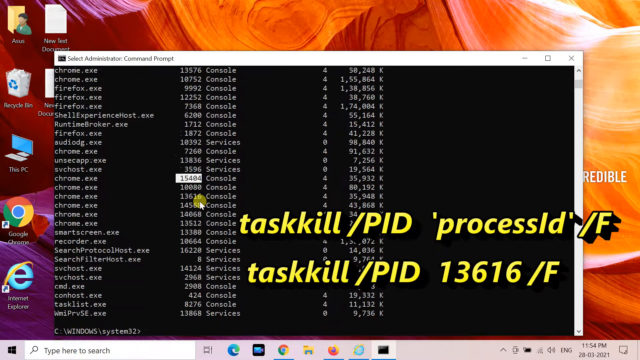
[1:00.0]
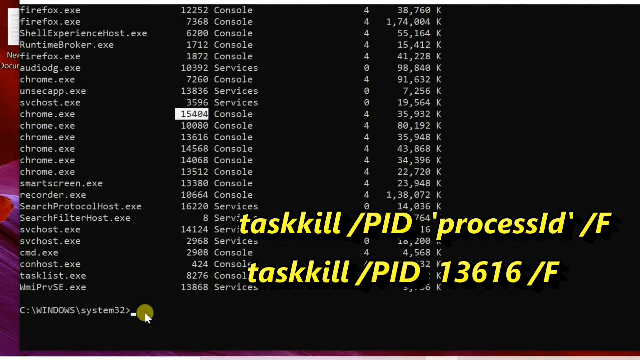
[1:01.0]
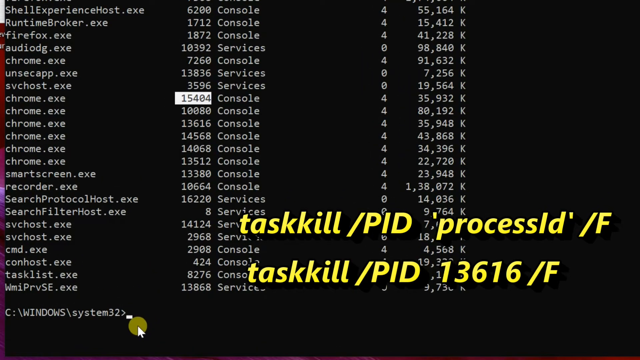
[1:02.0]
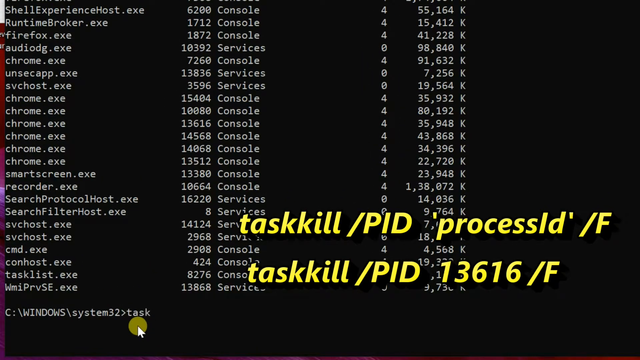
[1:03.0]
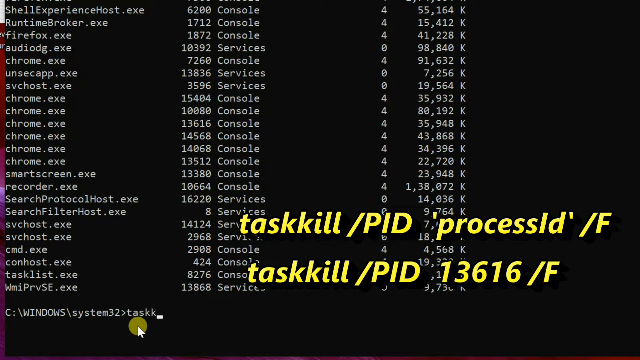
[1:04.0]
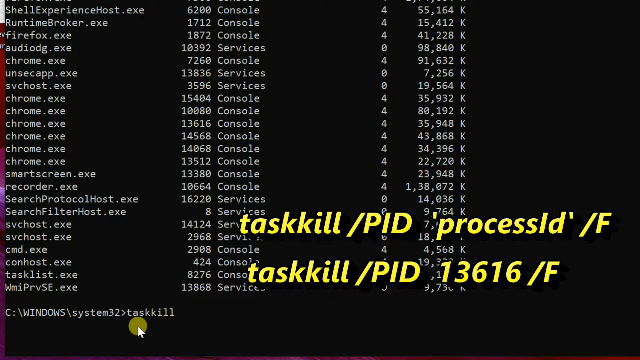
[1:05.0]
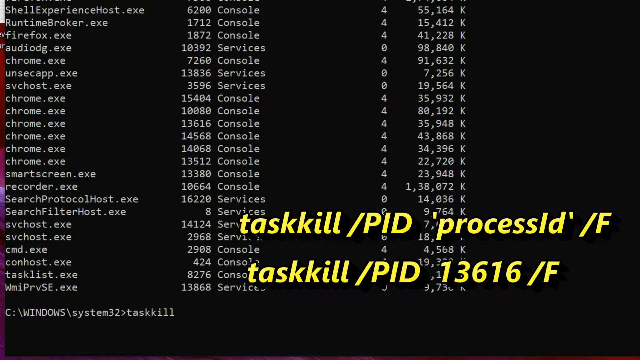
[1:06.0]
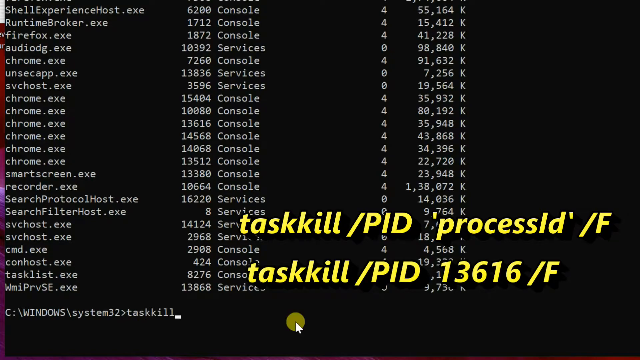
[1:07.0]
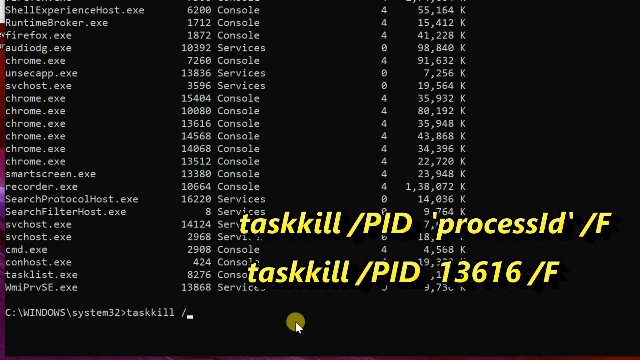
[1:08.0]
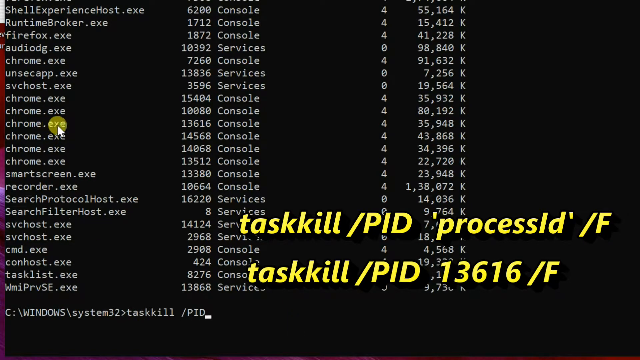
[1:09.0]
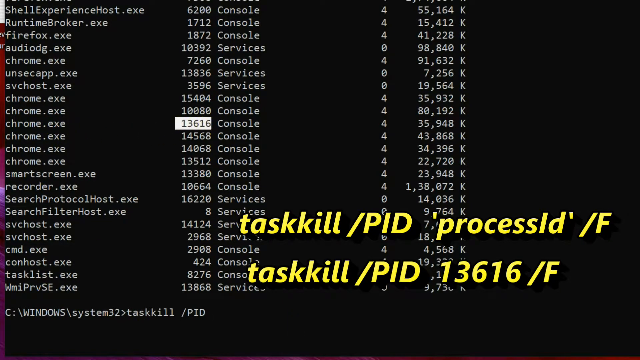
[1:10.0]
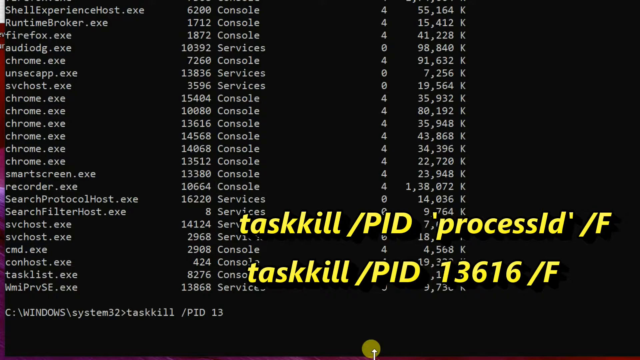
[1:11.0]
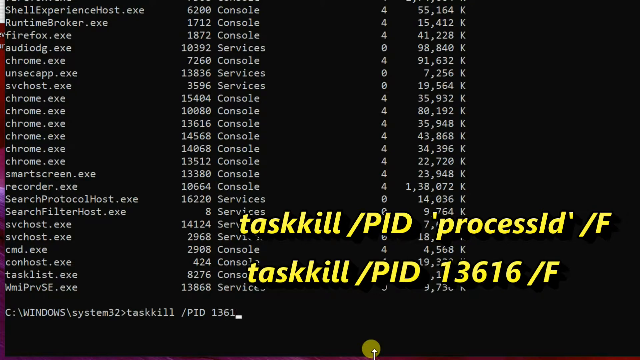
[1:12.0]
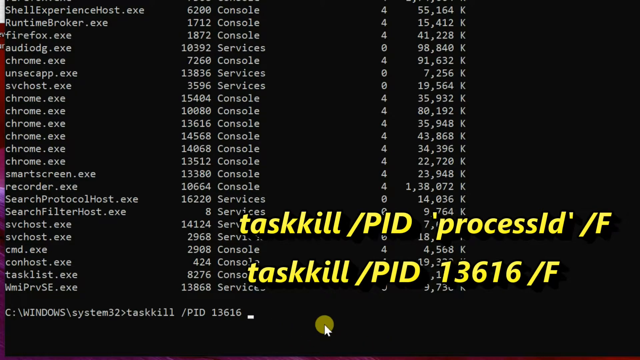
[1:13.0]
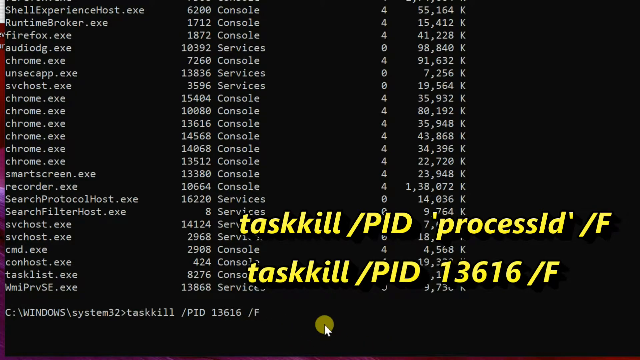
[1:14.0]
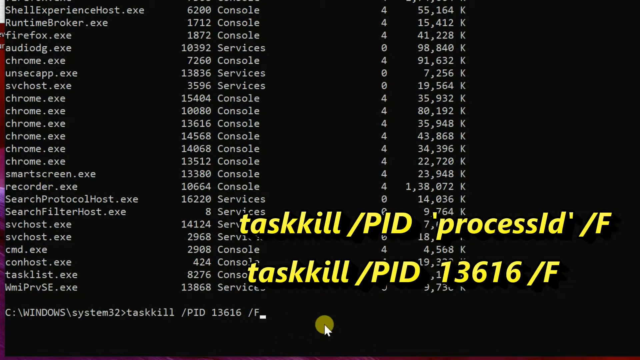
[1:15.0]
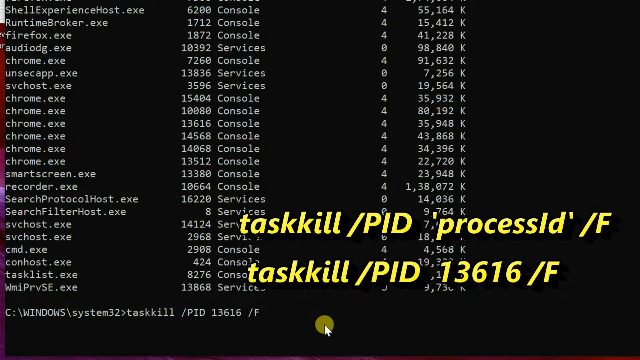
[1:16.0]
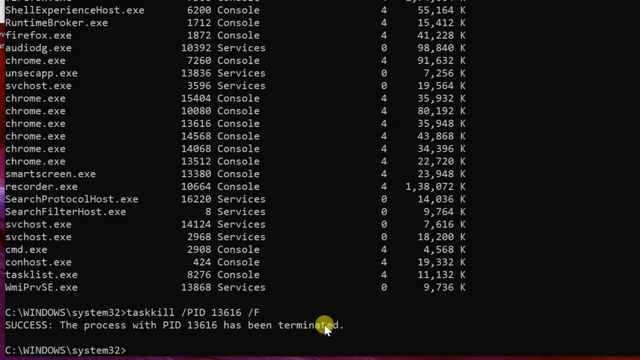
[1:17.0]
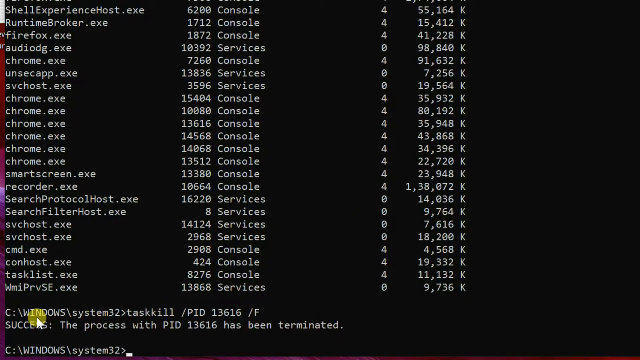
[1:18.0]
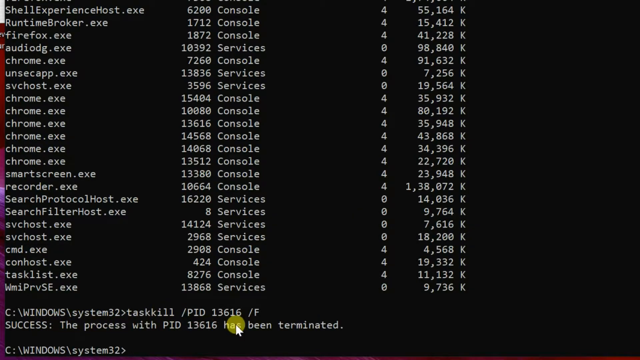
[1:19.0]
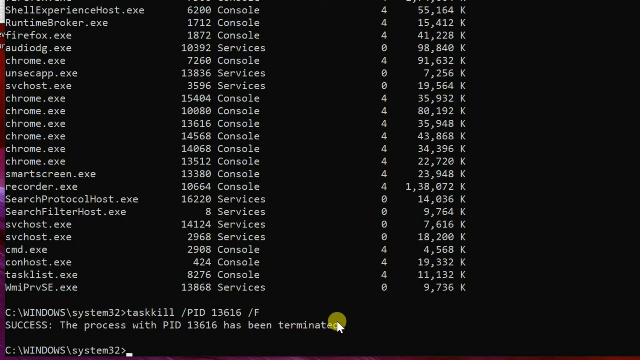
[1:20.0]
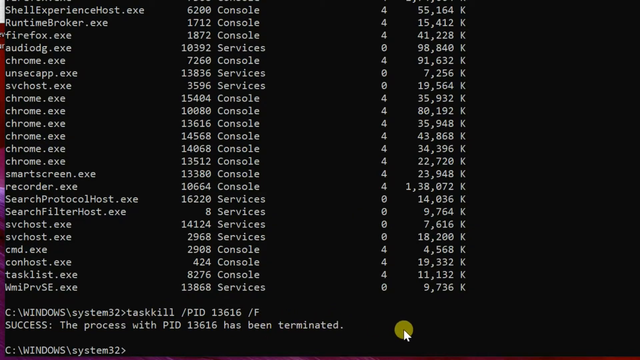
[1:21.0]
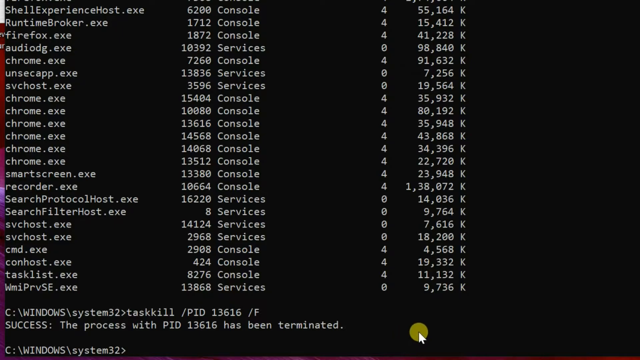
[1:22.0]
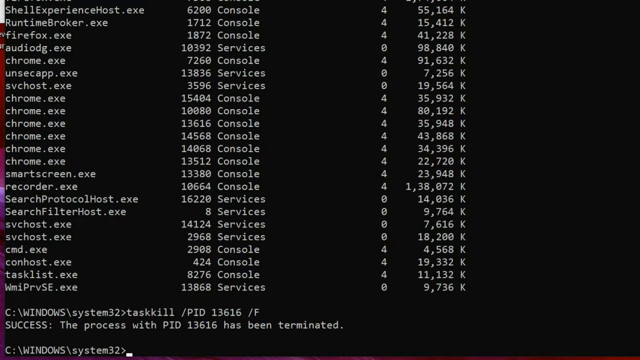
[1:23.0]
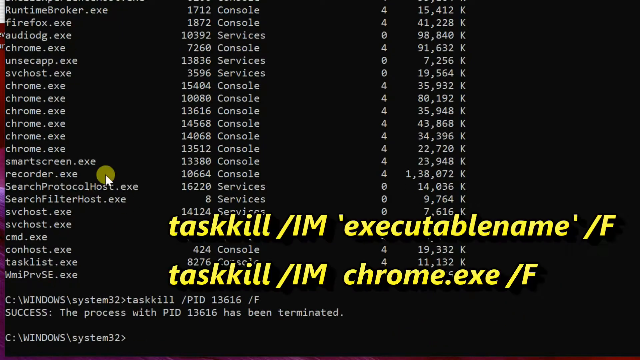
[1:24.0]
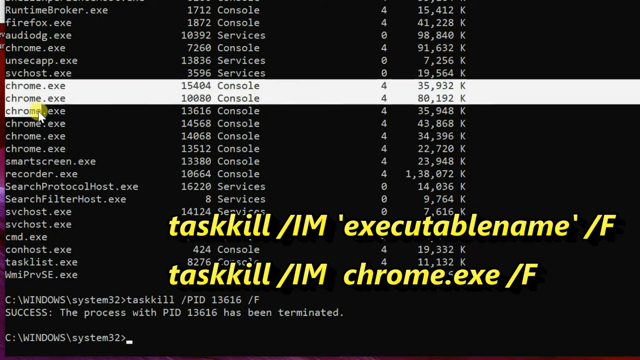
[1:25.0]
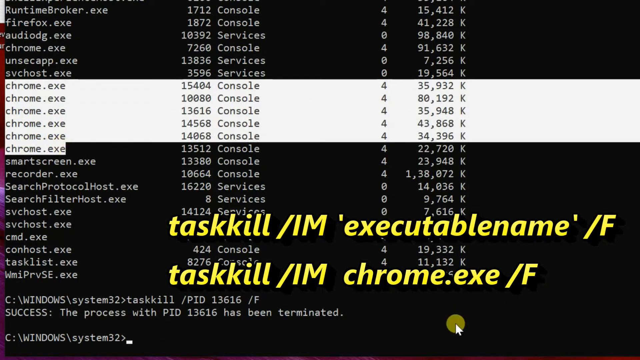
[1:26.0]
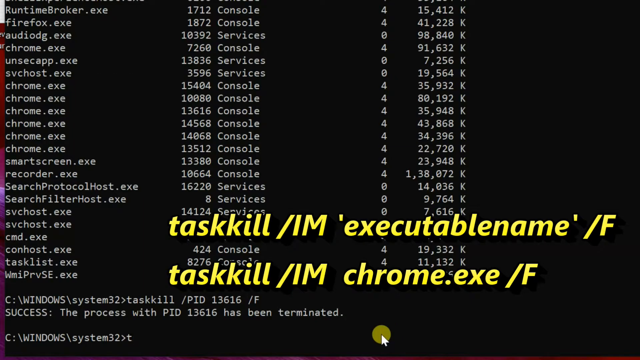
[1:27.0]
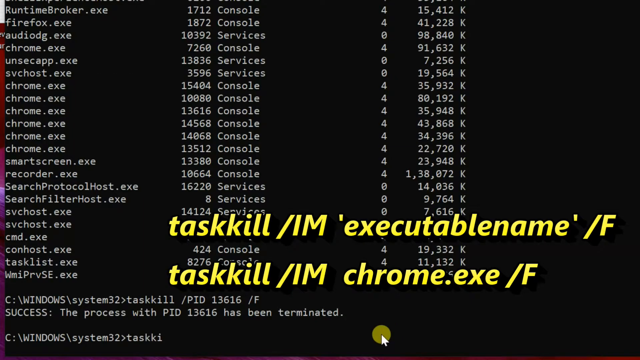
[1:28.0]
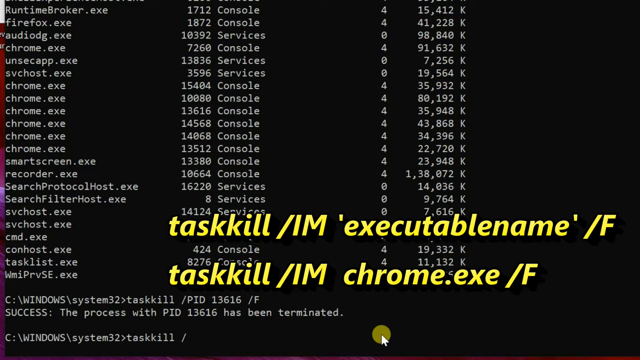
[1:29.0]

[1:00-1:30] The previously unreadable text is now legible: it shows how to kill a task from the command prompt. The syntax is taskkill /PID, followed by the process ID, then the switch /F. The example uses process ID 13616, which is assigned to Chrome. The syntax appears in yellow over the screen, while in the background the process ID 13616 assigned to Google Chrome is highlighted. The result of running the command is a success message that the process with PID 13616 has been terminated.